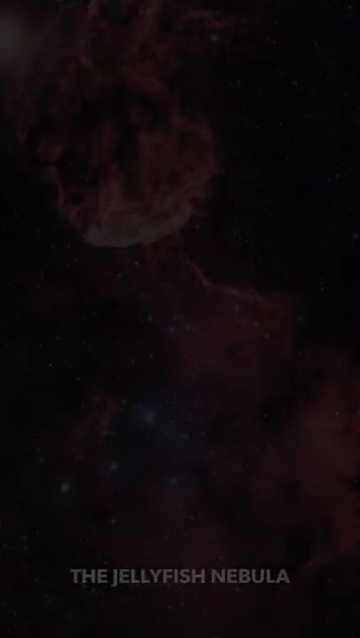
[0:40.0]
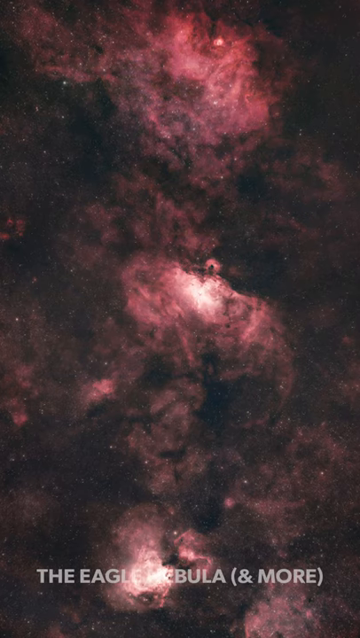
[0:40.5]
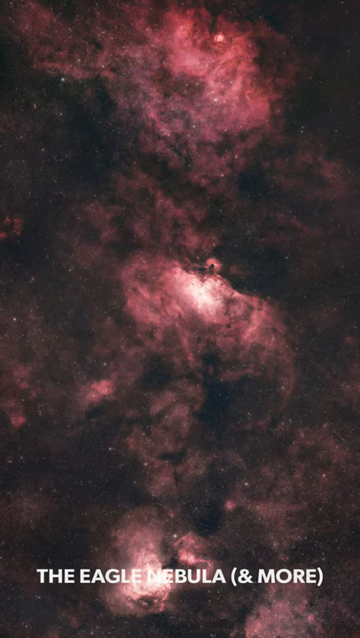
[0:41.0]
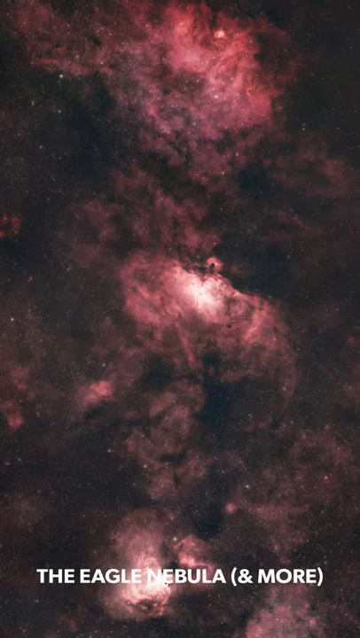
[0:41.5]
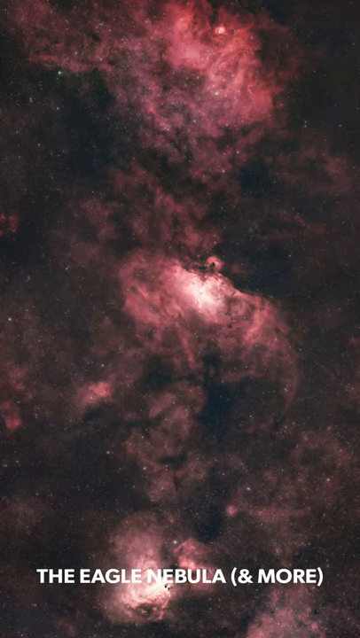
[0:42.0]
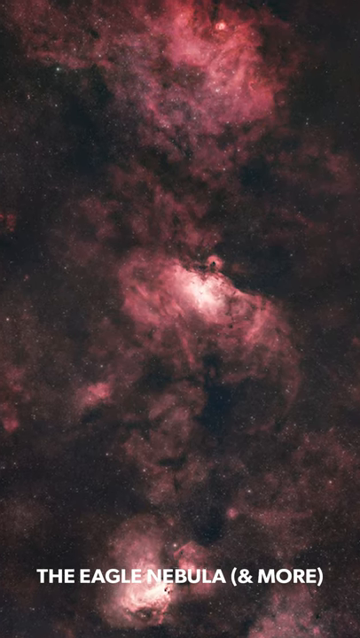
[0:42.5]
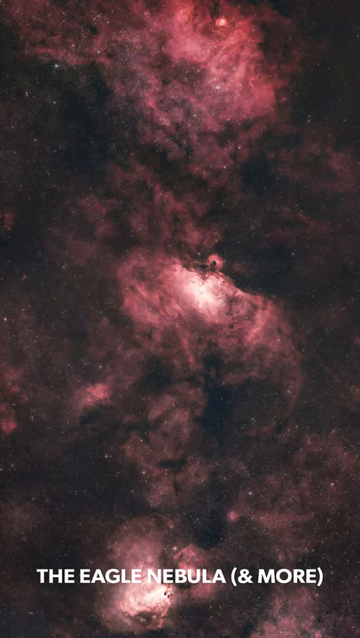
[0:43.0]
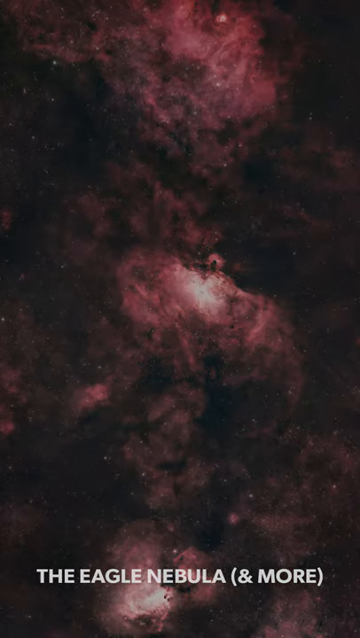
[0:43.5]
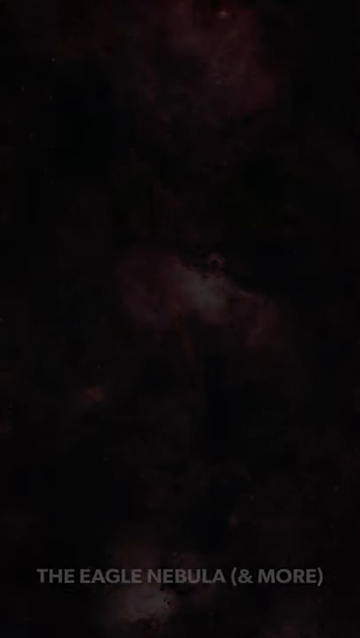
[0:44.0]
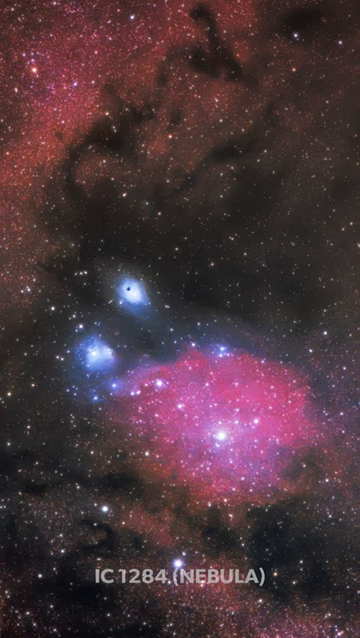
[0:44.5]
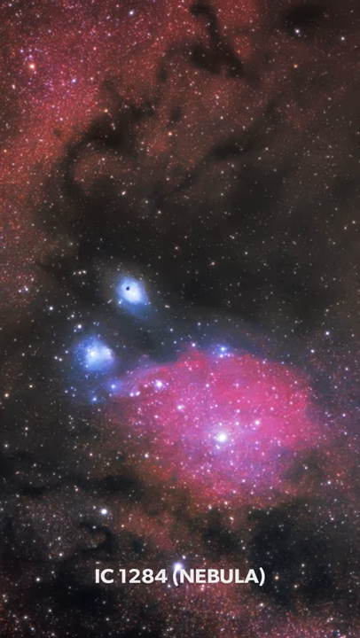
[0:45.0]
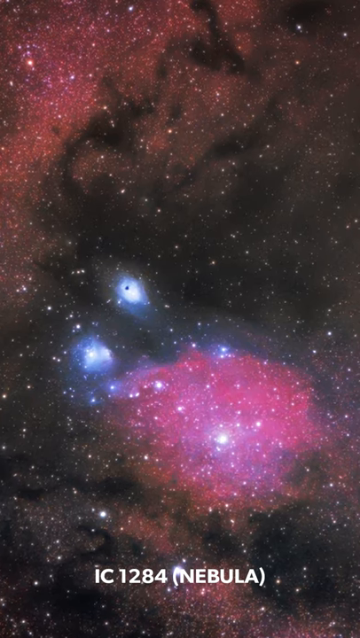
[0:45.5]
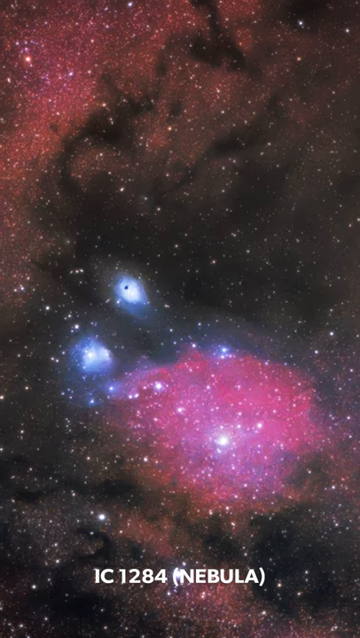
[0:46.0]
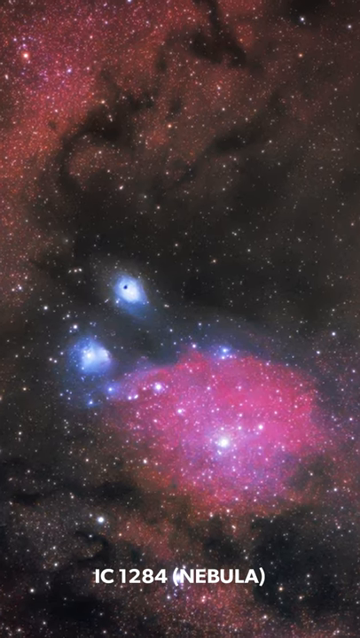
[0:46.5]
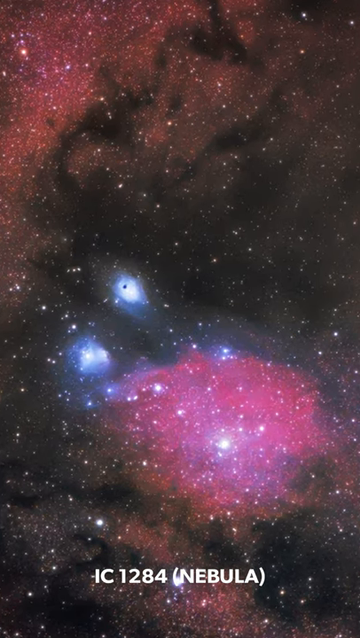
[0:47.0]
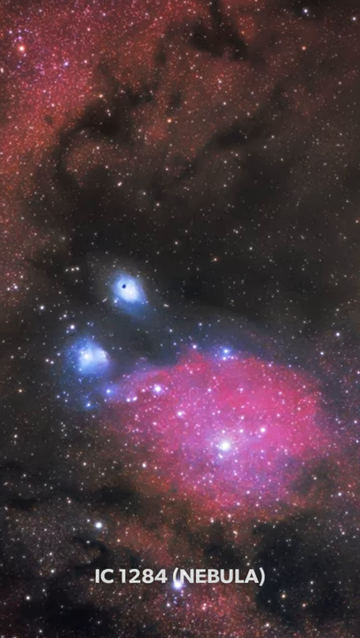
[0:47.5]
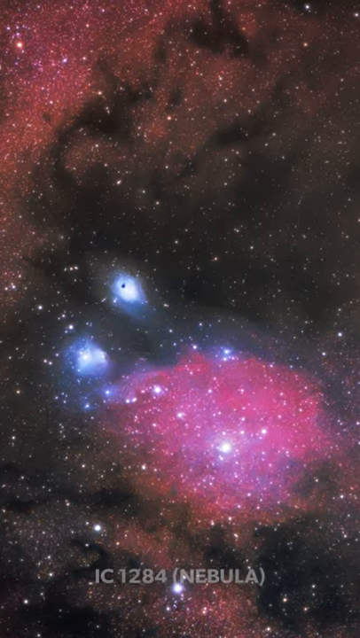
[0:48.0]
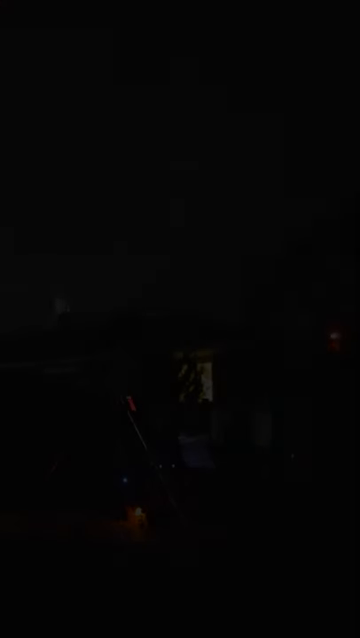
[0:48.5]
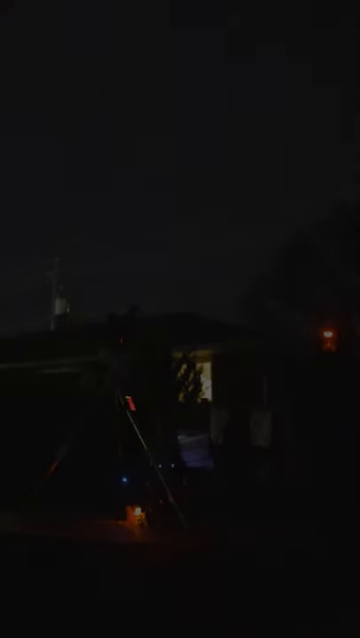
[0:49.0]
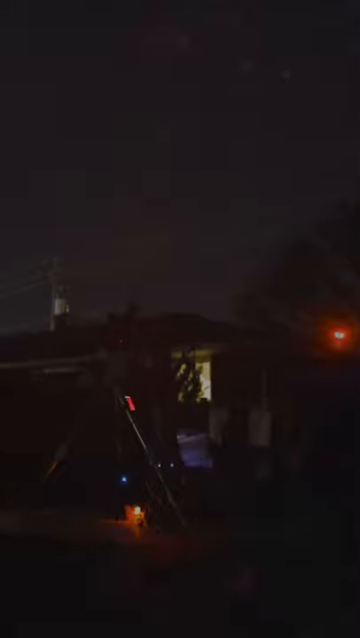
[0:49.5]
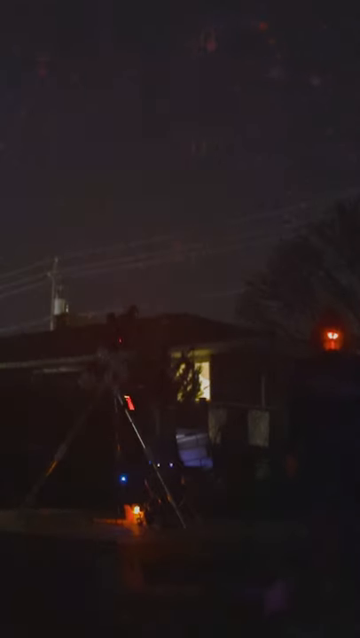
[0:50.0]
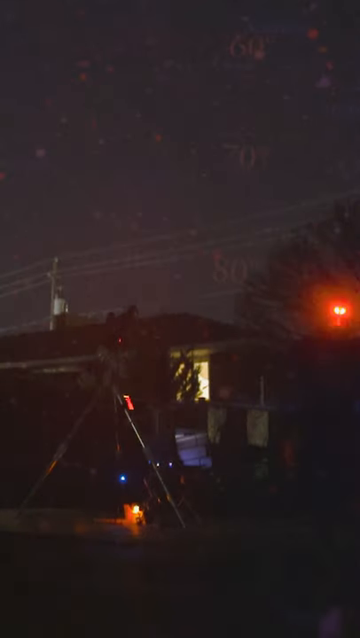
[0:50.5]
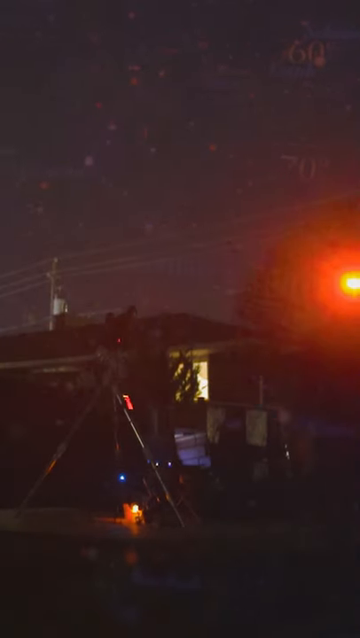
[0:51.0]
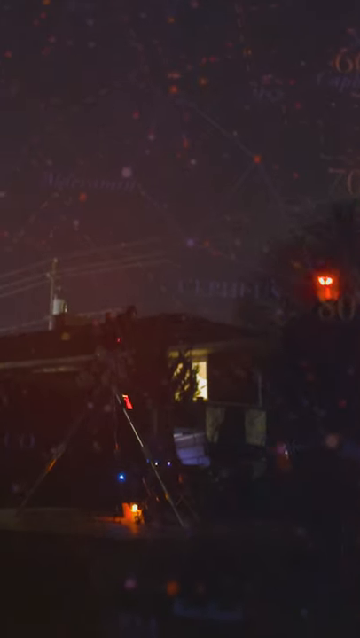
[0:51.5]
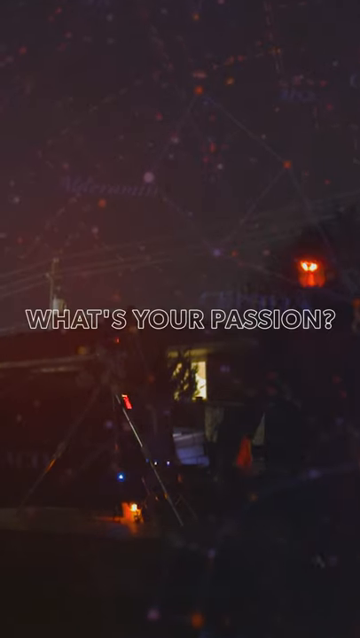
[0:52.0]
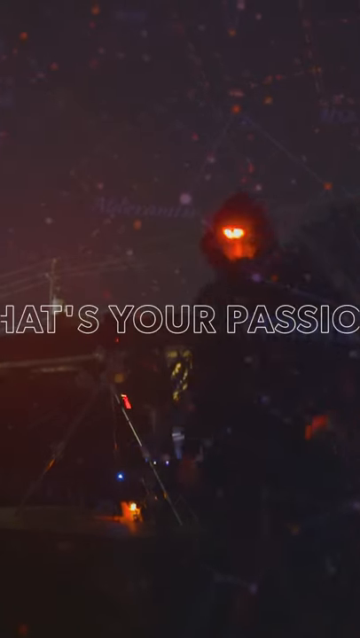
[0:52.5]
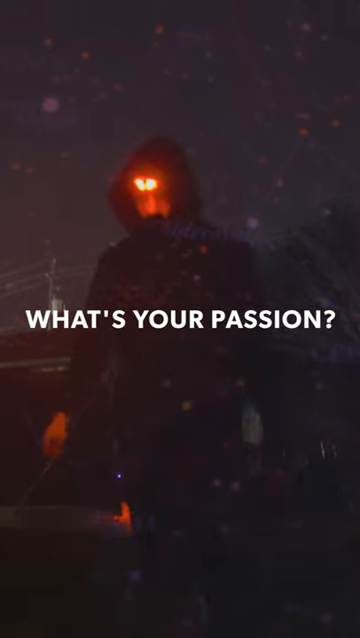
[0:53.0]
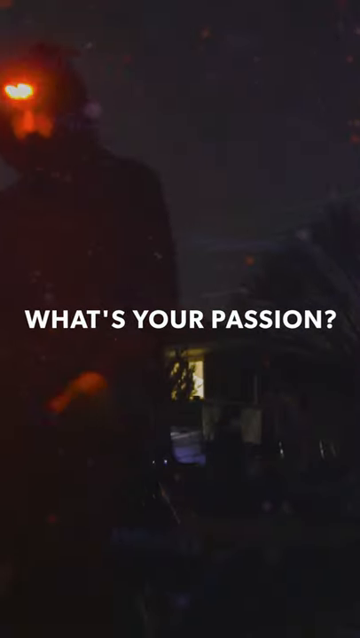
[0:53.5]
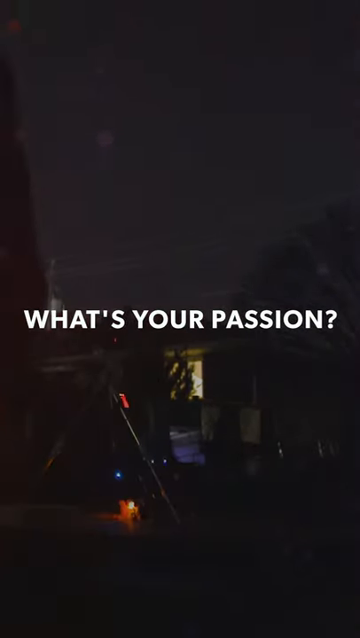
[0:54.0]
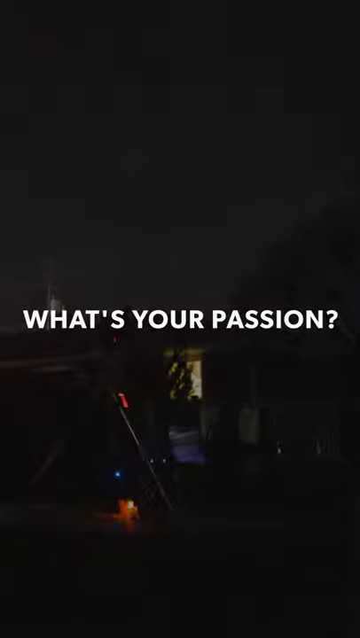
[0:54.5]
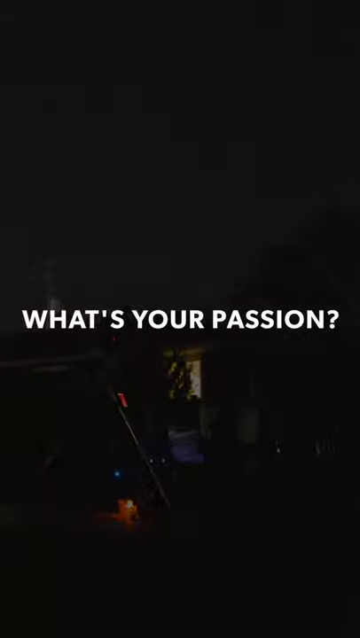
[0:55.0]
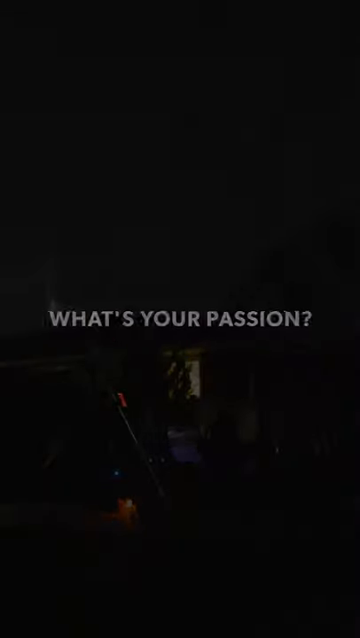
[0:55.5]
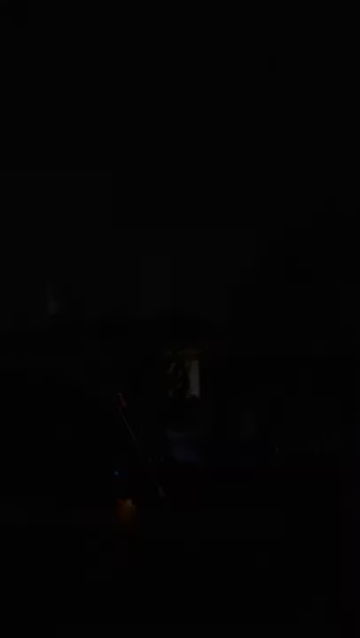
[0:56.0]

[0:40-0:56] The slideshow continues with the Eagle Nebula, which is red and in the shape of an eagle, followed by another nebula showing red and purple, named the IC 1284 Nebula. The video finishes with a shot of the man in his backyard at nighttime with his telescope set up. Some sort of star chart flashes on screen, and the man walks in front of the camera wearing his red headlamp. The words "What's your passion?" appear across the screen, and the video fades out.